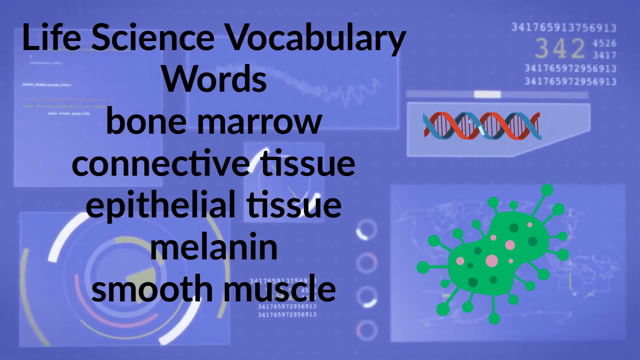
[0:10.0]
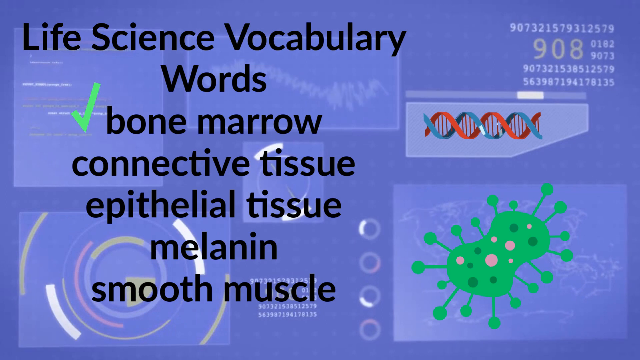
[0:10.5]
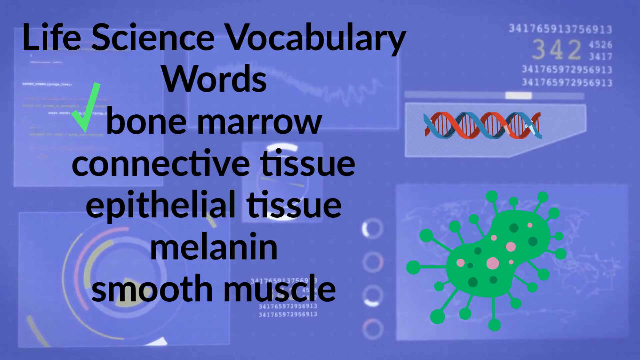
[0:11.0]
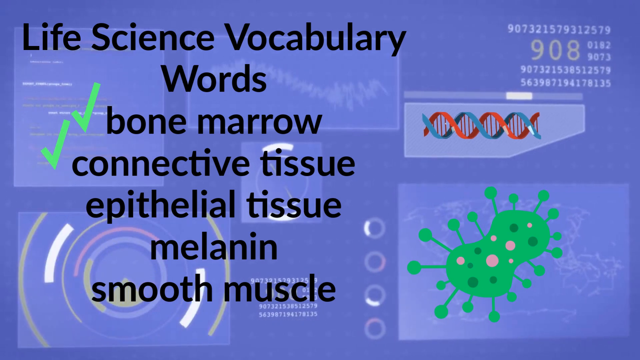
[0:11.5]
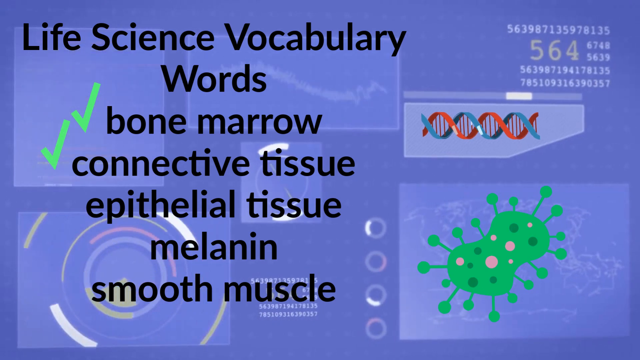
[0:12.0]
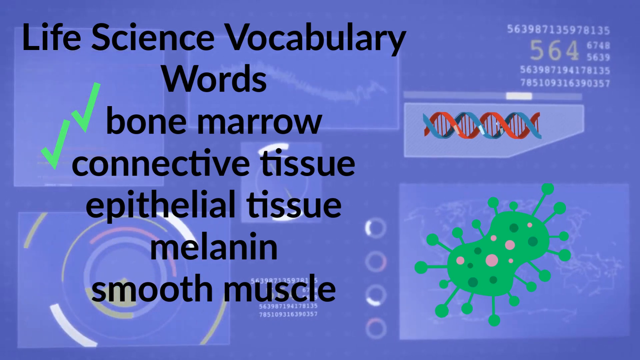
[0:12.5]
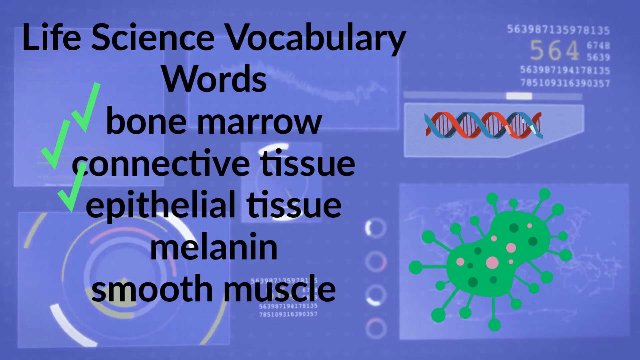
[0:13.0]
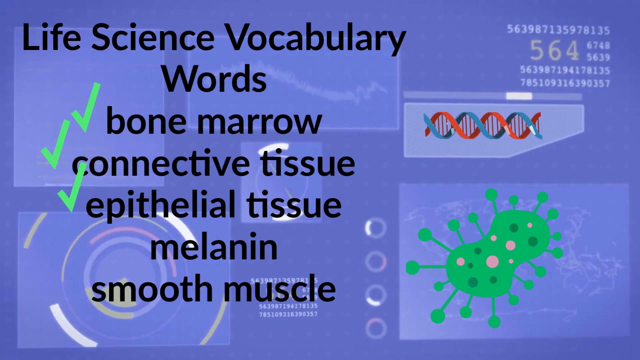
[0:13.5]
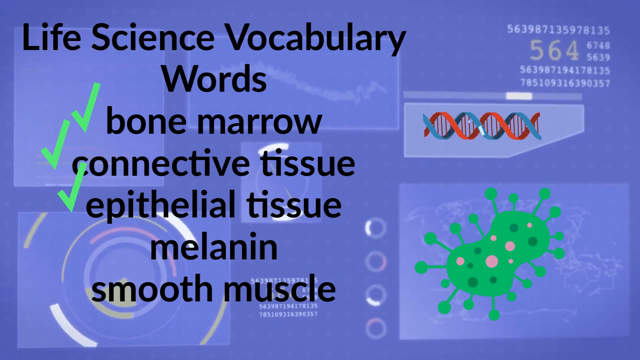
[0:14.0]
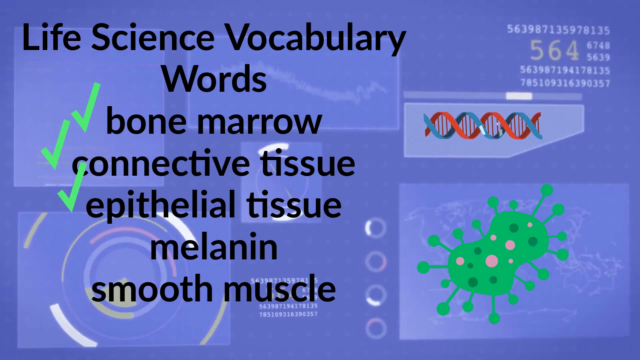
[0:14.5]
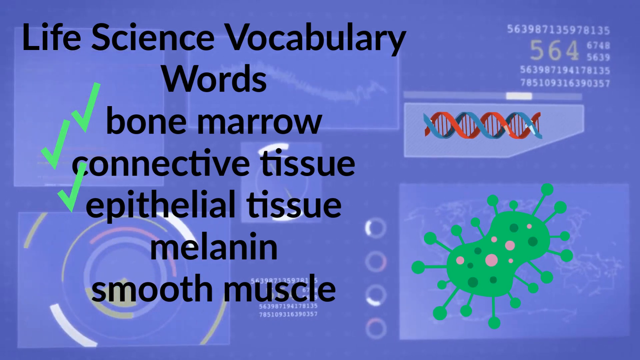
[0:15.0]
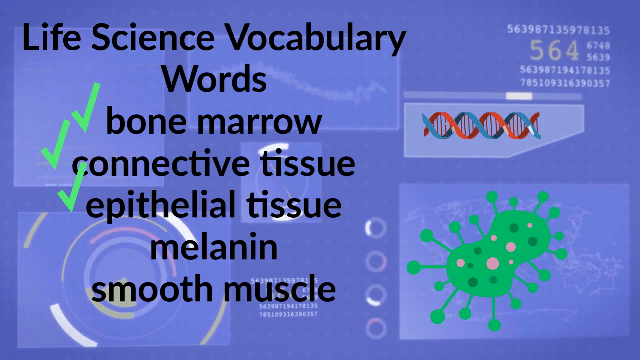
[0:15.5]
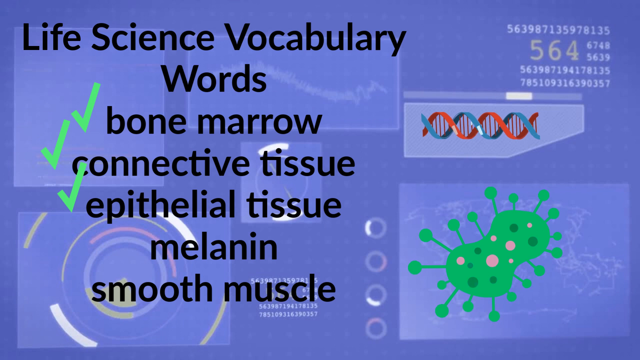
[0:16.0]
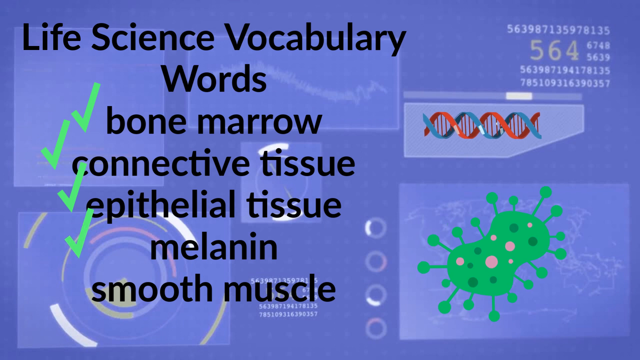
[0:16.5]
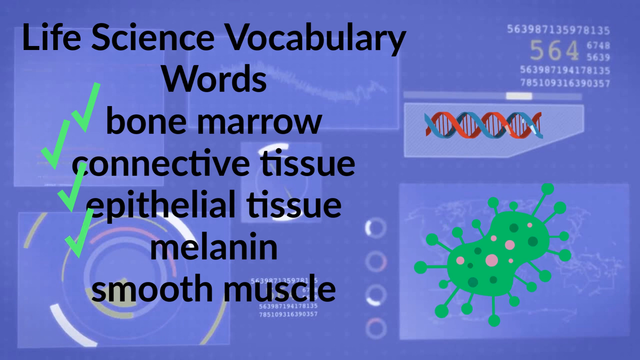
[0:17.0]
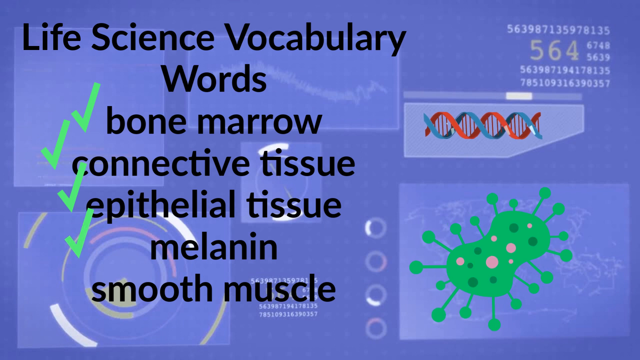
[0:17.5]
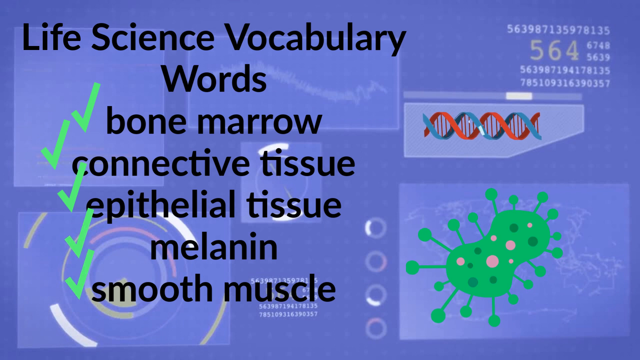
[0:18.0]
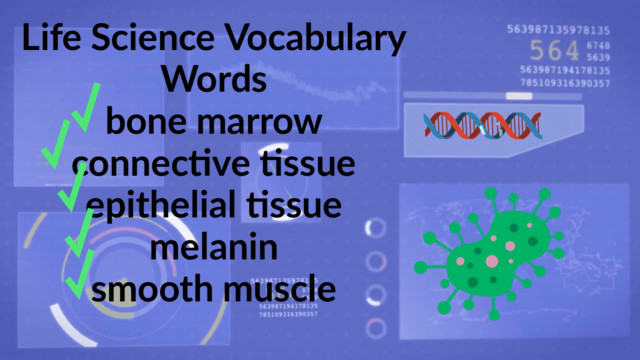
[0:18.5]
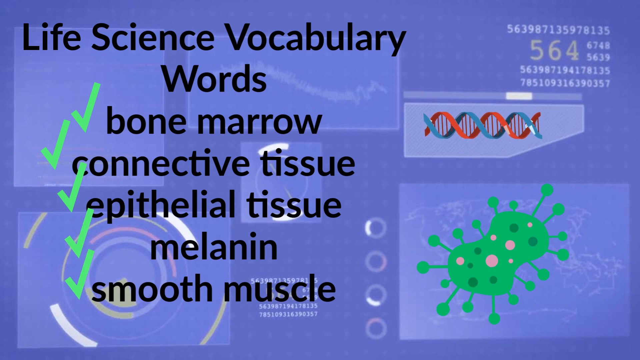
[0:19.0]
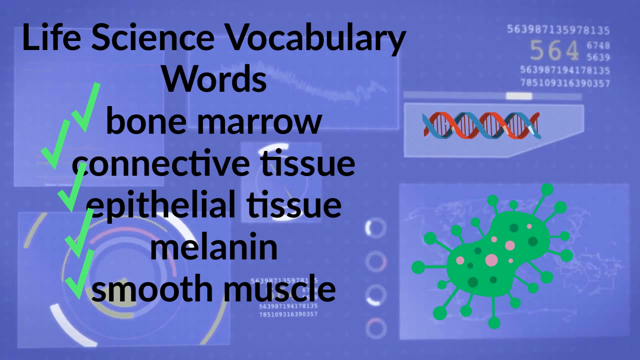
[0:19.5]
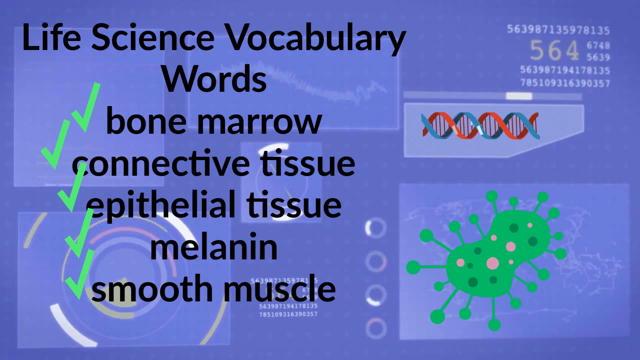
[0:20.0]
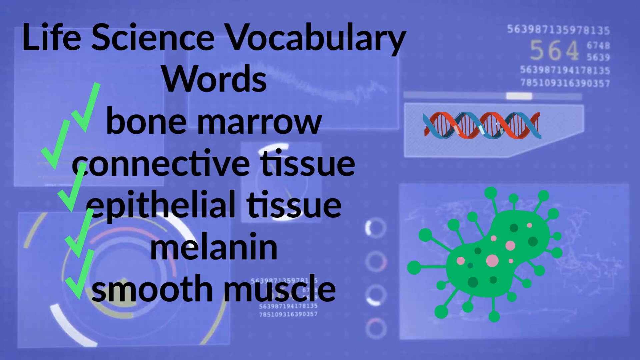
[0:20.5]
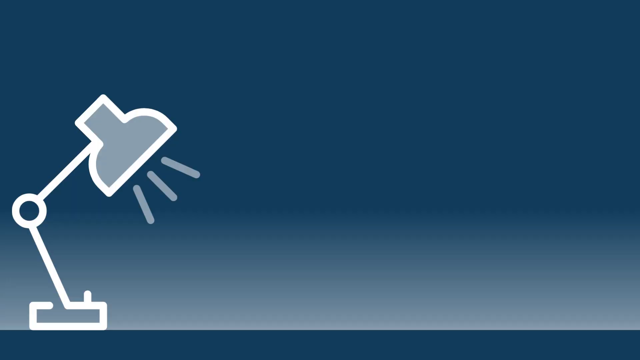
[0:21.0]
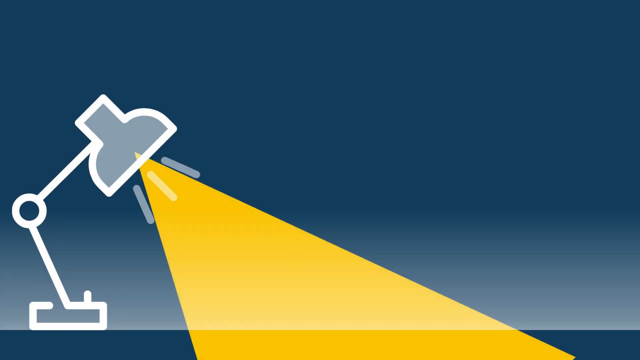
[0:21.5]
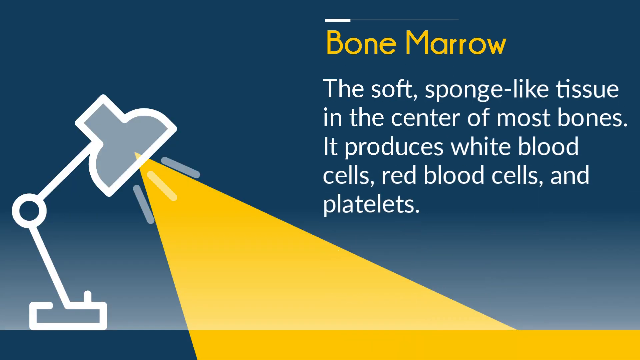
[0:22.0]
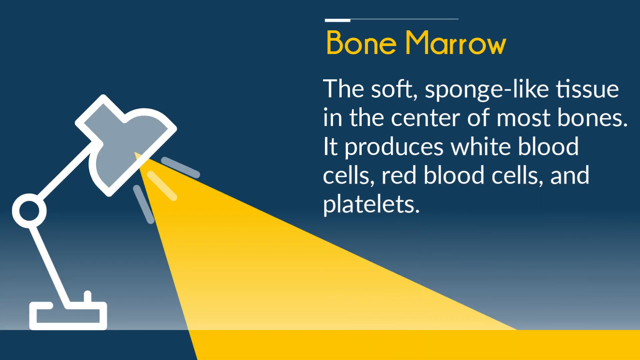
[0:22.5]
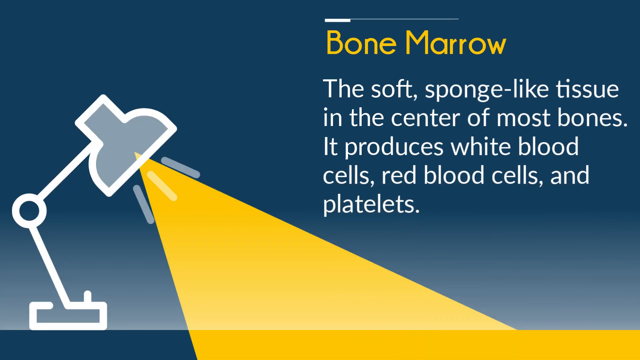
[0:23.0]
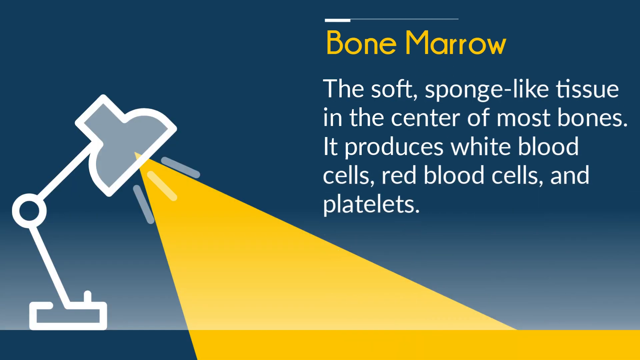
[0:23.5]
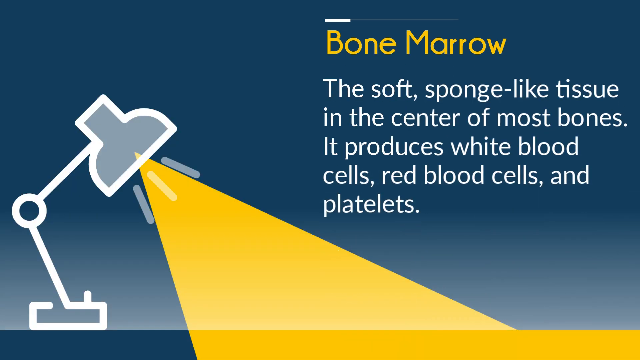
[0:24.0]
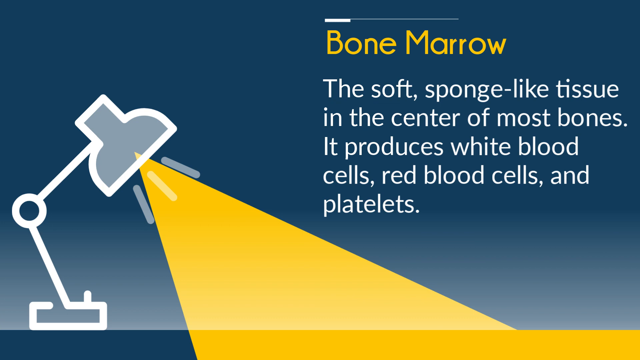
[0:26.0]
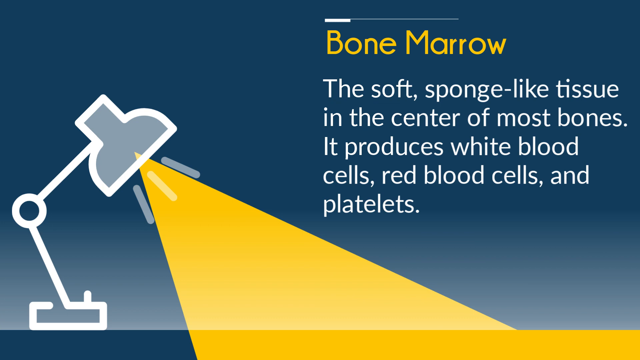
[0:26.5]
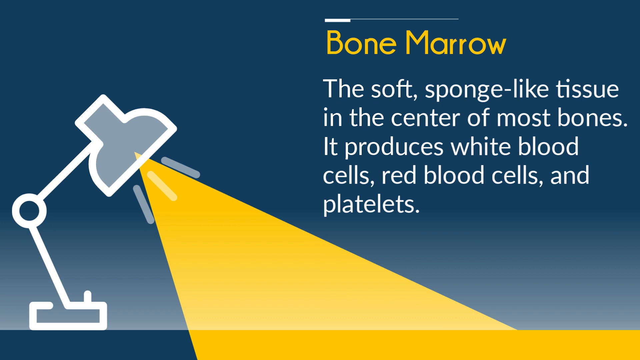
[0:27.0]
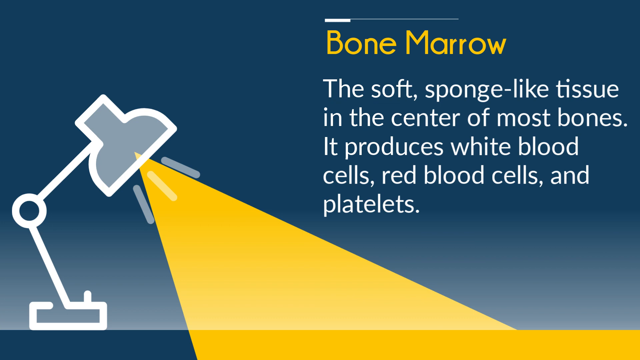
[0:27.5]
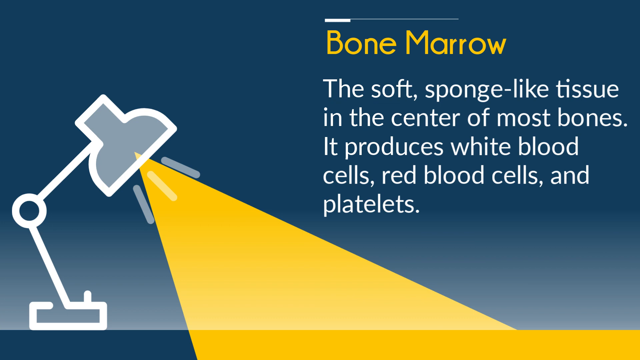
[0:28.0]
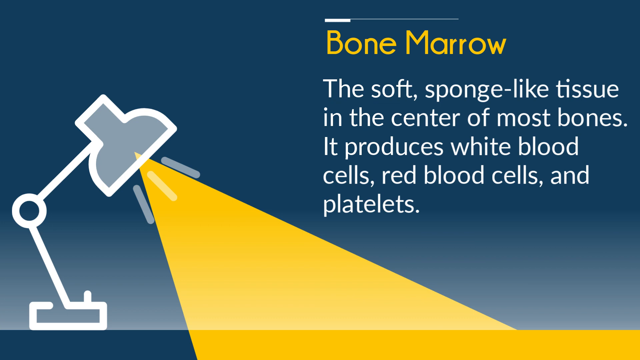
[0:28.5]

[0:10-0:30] Cartoon drawings appear on a purple background, including a DNA double helix, a green bacterium, charts, and a number of changing numbers. A large, clear heading reads "life science vocabulary", followed by the words bone marrow, connective tissue, epithelial tissue, melanin, and smooth muscle. The scene then changes to a desk lamp with its light beaming down from top to bottom. To the side is the word "bone marrow", and underneath it is a definition: "The soft sponge-like tissue in the center of most bones. It produces white blood cells, red blood cells, and platelets." The video stays focused on this definition. The background is dark blue, and toward the bottom it is more or less whitish, more of a gray color.